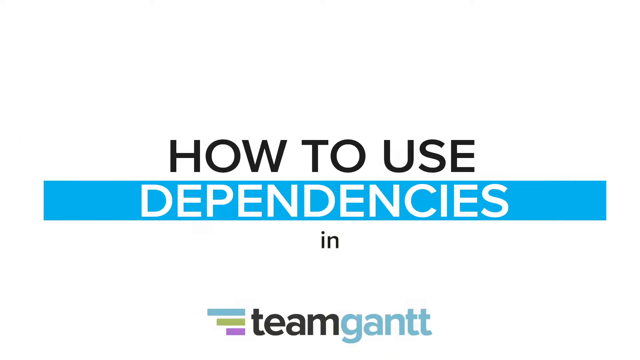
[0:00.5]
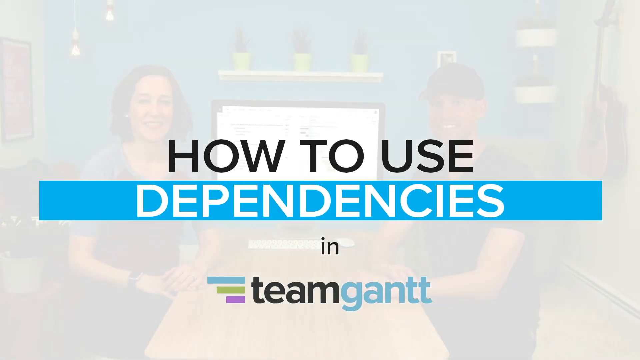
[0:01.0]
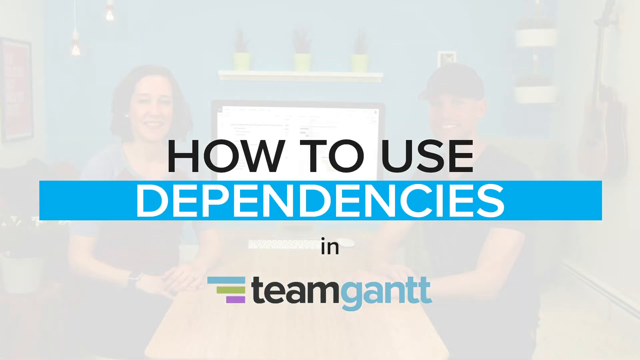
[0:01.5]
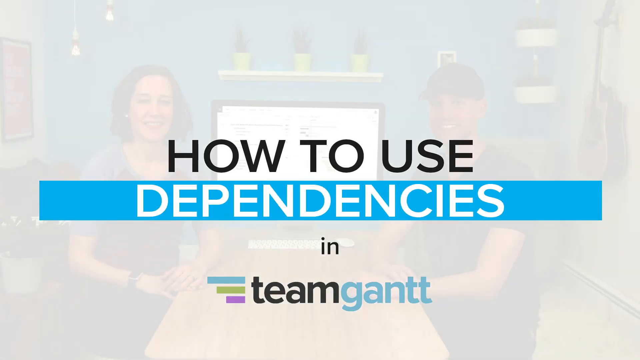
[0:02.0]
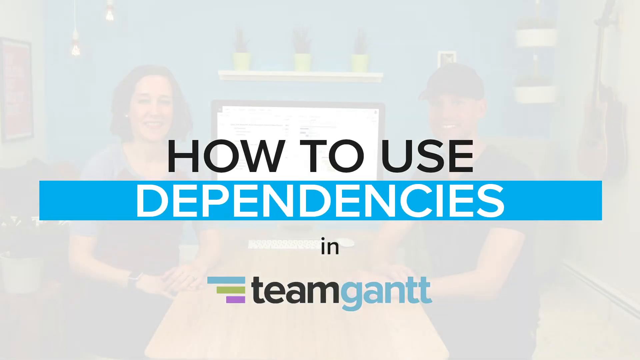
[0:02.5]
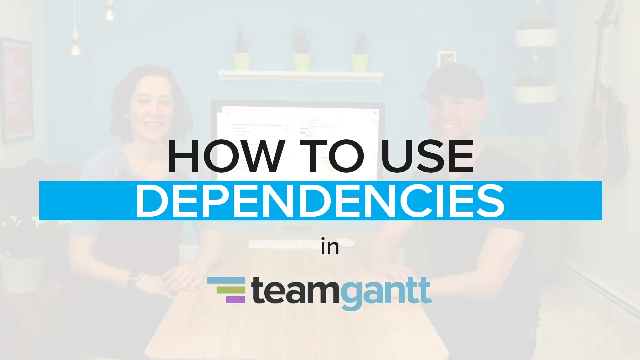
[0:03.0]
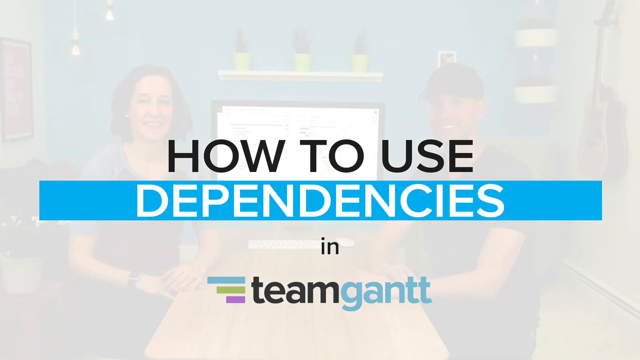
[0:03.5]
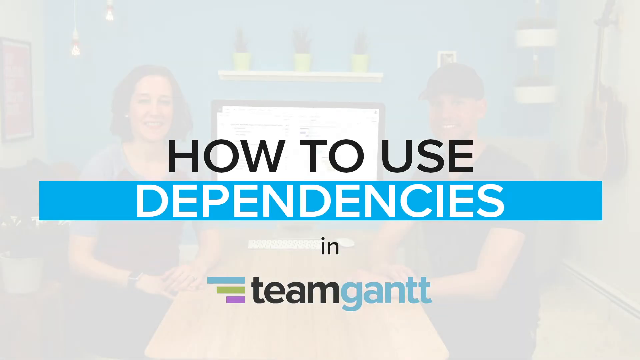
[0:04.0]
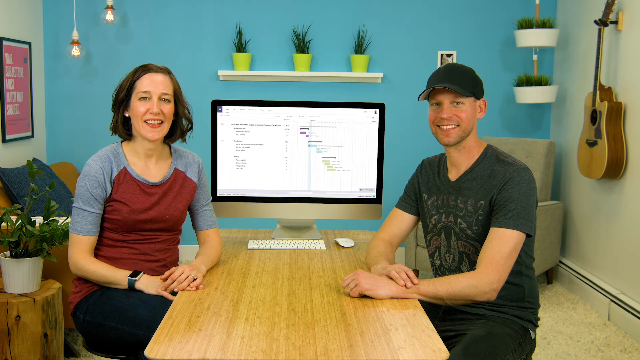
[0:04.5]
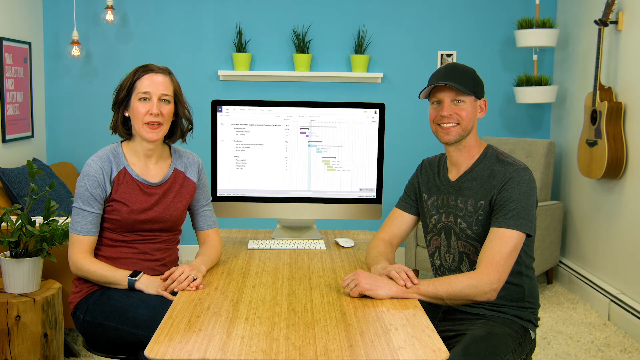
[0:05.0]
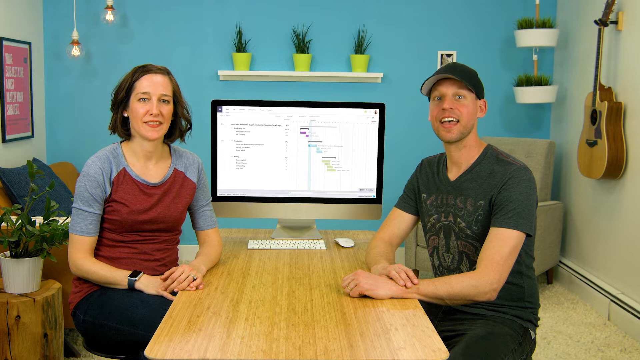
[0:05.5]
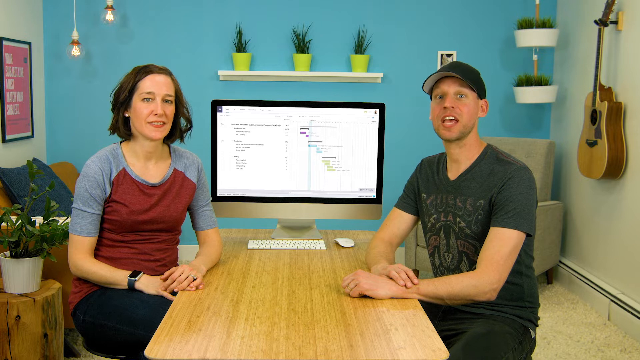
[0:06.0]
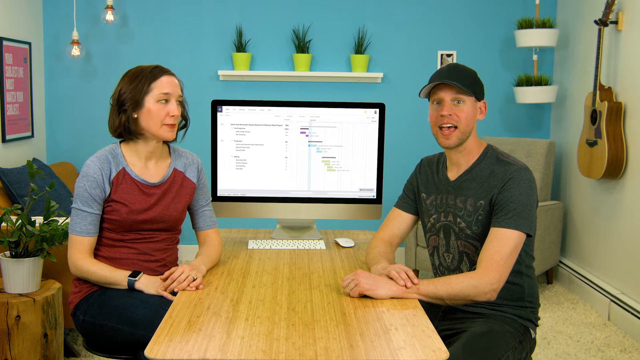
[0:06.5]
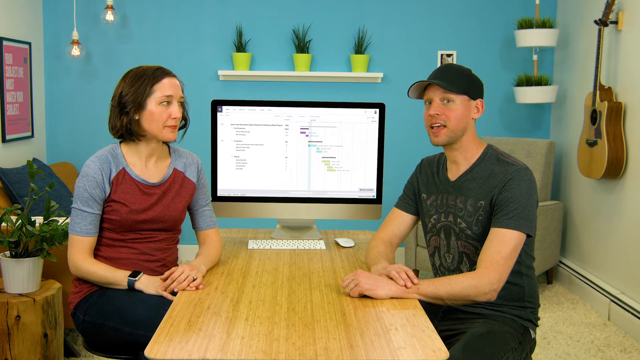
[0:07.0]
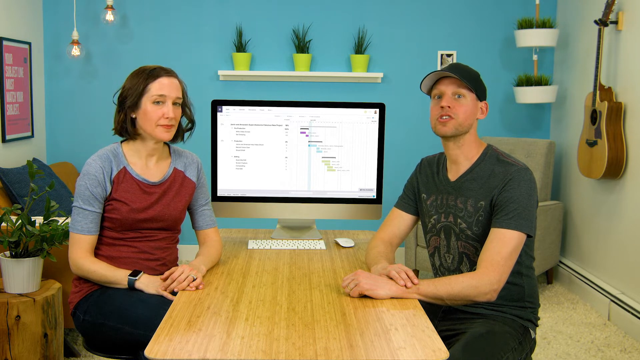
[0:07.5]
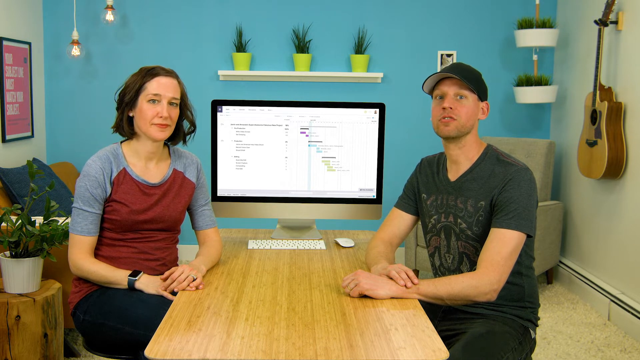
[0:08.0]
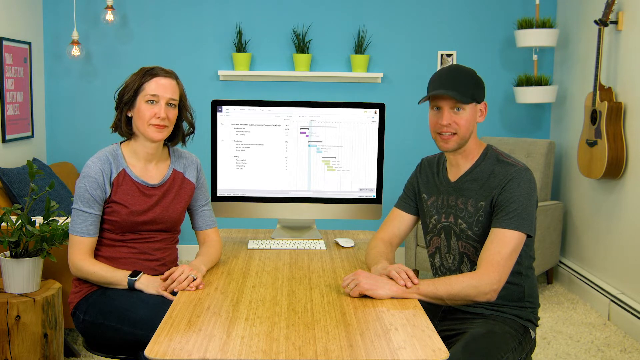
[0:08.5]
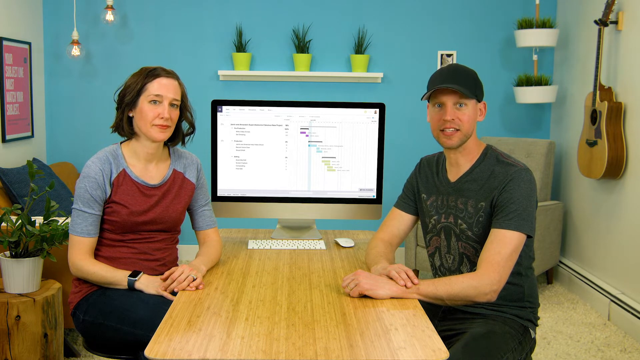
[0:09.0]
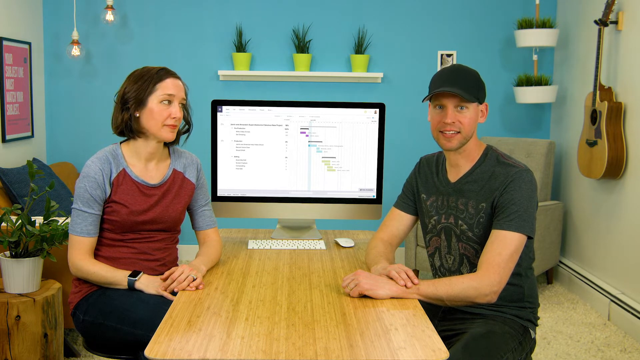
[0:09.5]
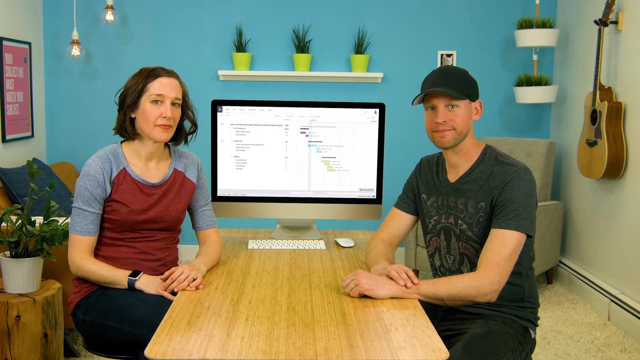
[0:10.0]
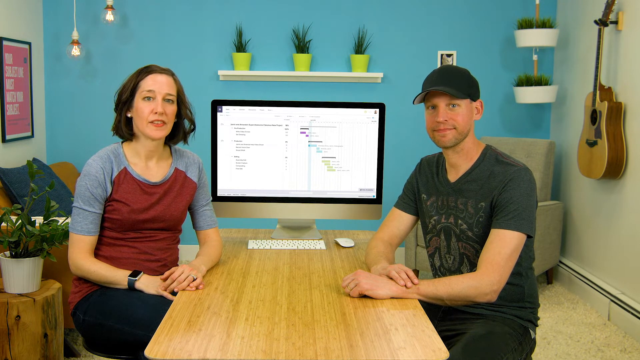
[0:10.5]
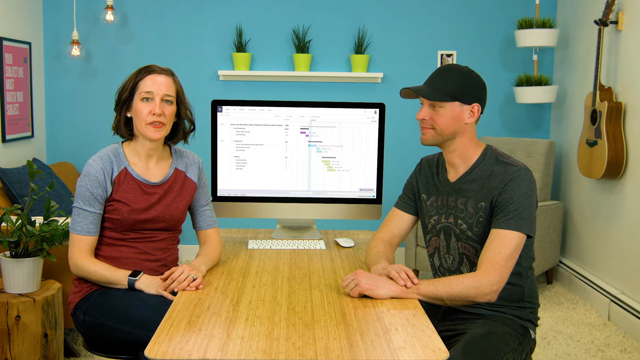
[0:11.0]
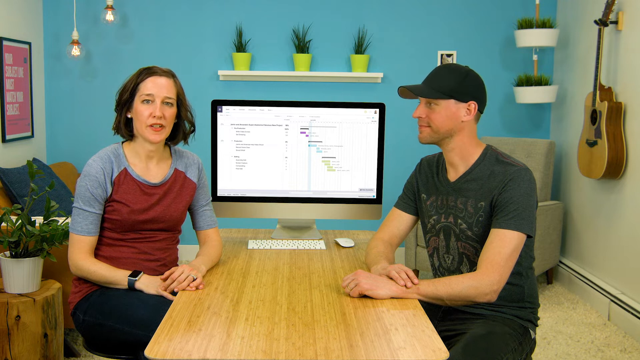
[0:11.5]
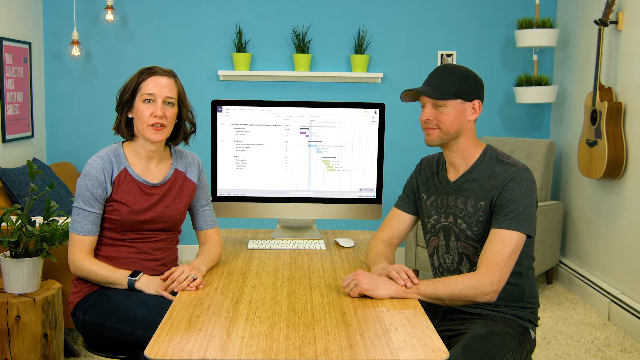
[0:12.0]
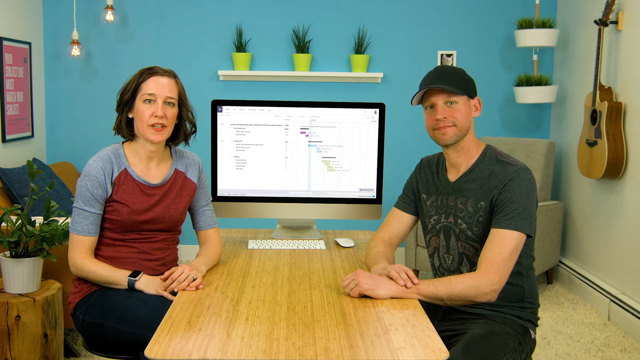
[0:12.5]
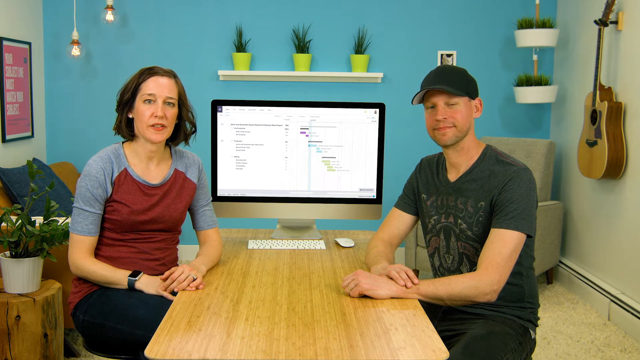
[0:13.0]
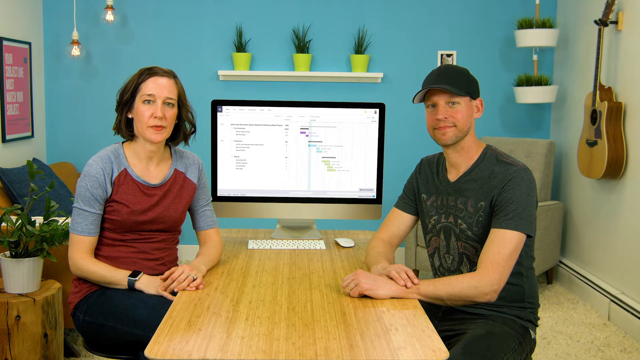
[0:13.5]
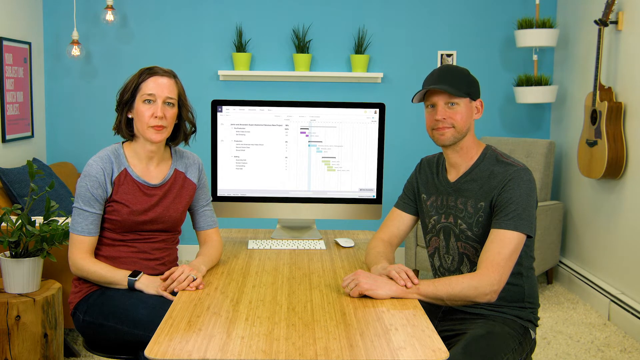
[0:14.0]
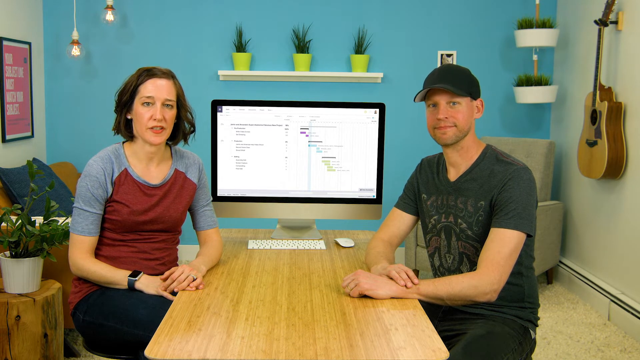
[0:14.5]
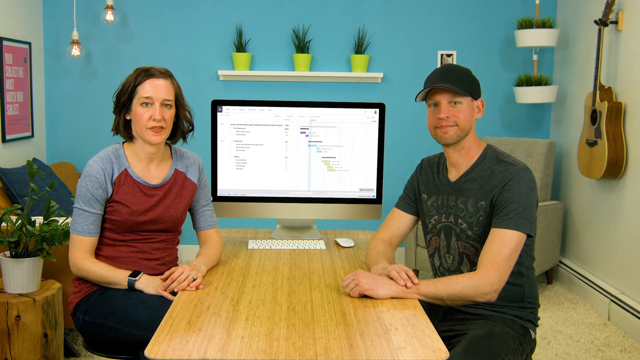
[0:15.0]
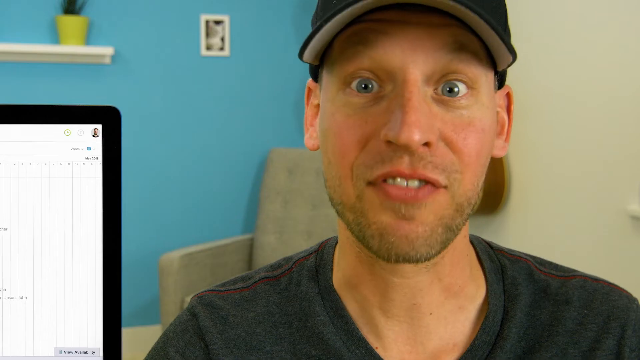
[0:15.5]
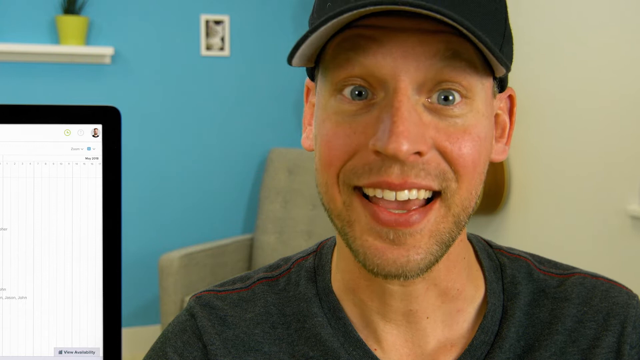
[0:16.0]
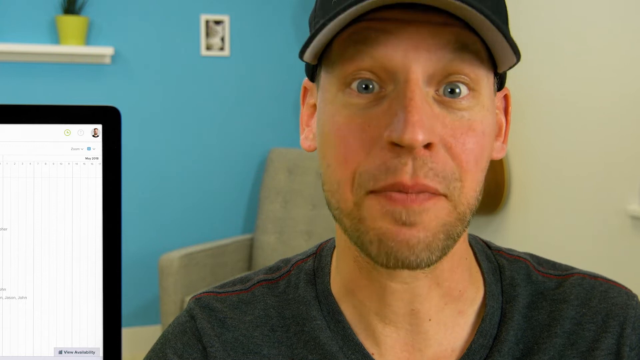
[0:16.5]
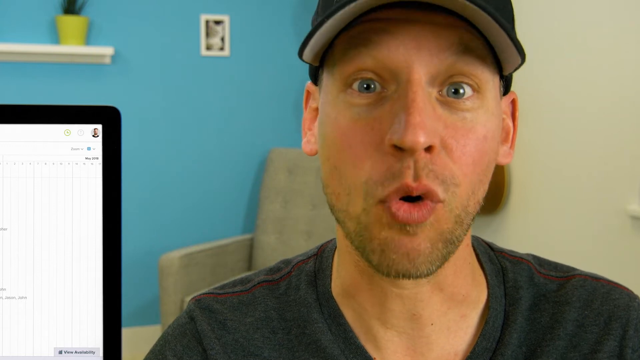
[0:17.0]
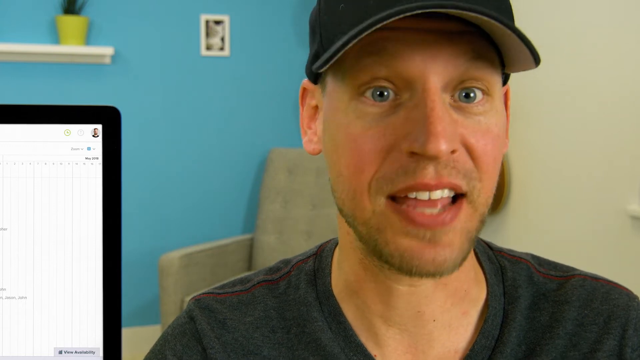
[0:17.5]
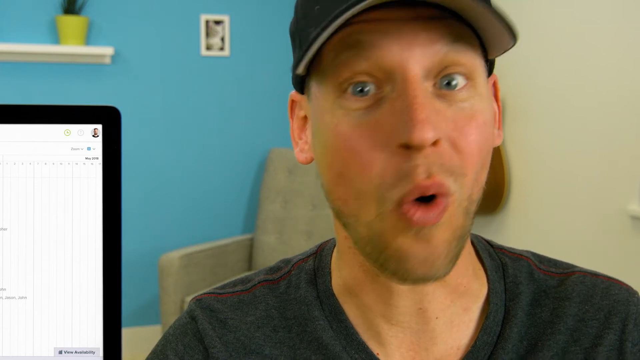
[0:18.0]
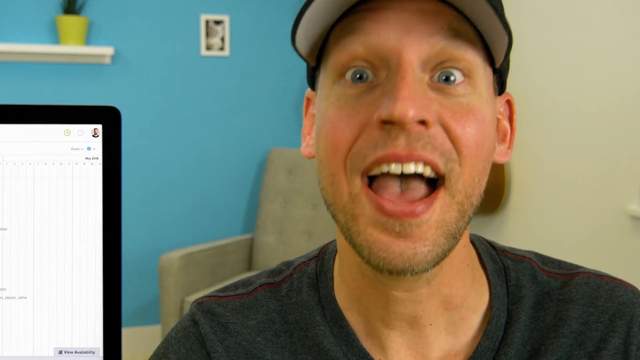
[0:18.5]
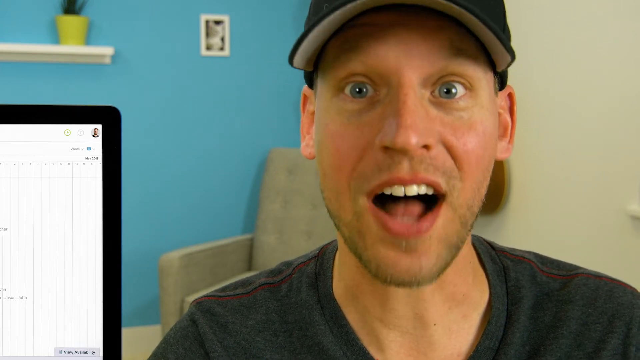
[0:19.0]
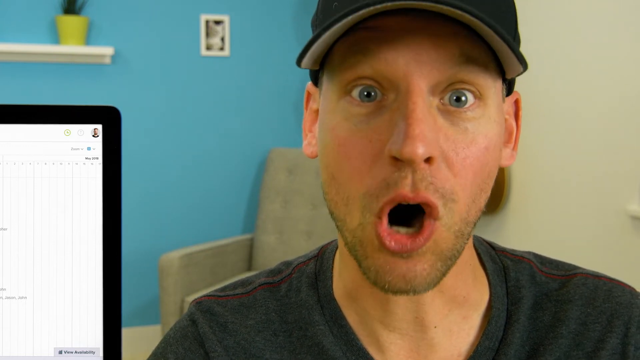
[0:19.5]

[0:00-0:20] Black on-screen text reads "how to use," followed by a blue banner with white bold text reading "dependencies in Team Gantt." Blue, green and purple boxes are to the left of it, and the text "Team Gantt" is black and blue. This stays on screen for a couple of seconds, then the video moves to two people. On the left is a woman with short brown hair wearing a gray and red shirt with jeans, and a fitness tracker is visible on her arm. On the other side is a man in a black hat and a gray t-shirt. The room has a shelf with three plants, some lights hanging down from the ceiling, other plants on the left side and on the right side near the wall, a guitar on the wall, a chair by the edge of the wall on the right side, and another chair on the left side. In the center between them is a computer with a mouse and keyboard on a table. The woman talks to the camera, then the man talks. The woman looks at the man while he continues talking to the camera, then back at him again. She then begins to talk while he looks at her and at the camera, and he nods in agreement with her. The shot then moves to a close-up of the man's face, with the edge of the computer partly visible on his left side.